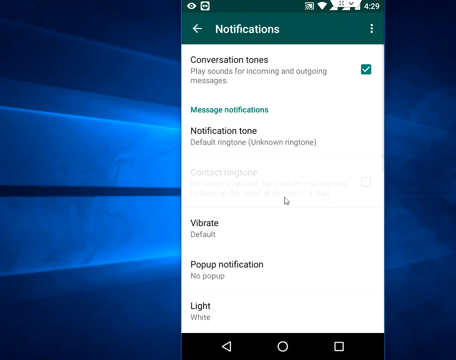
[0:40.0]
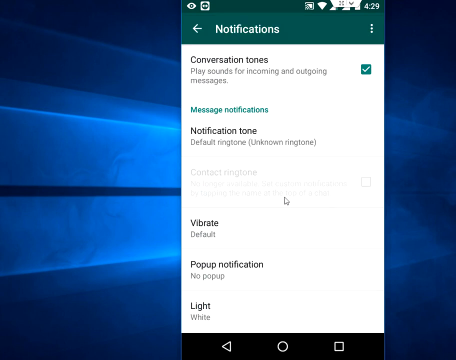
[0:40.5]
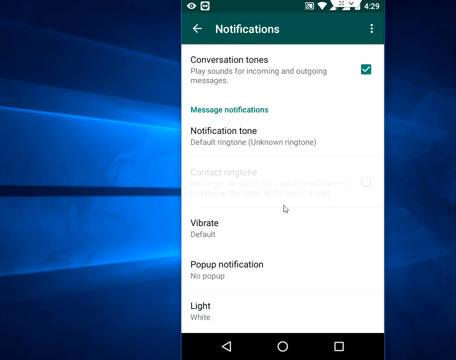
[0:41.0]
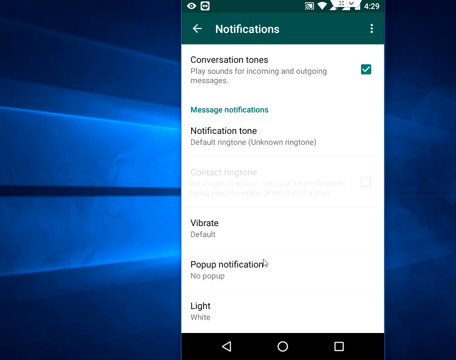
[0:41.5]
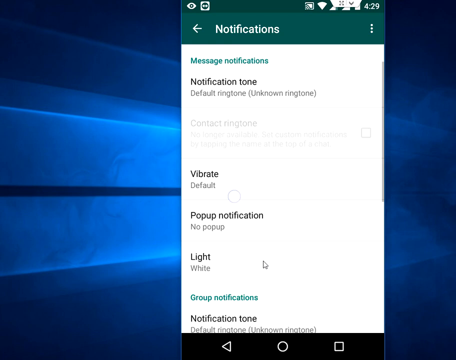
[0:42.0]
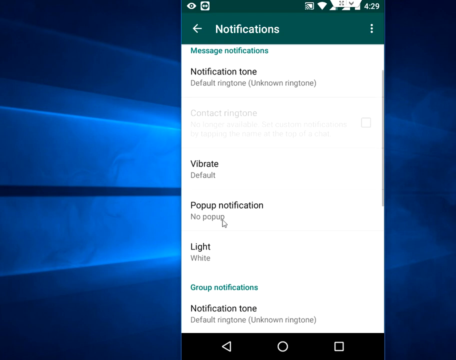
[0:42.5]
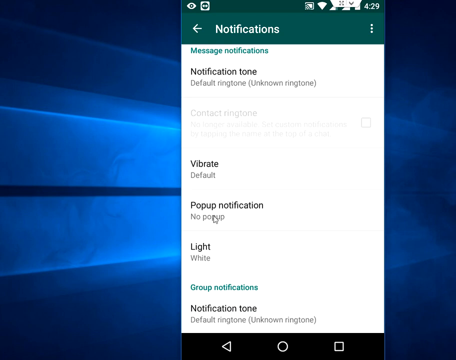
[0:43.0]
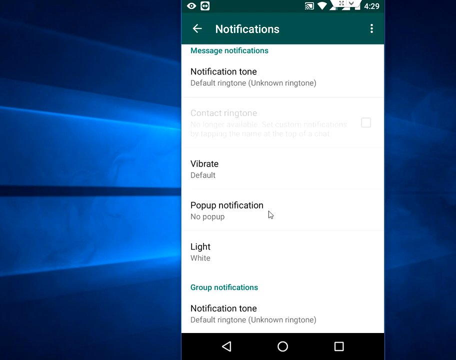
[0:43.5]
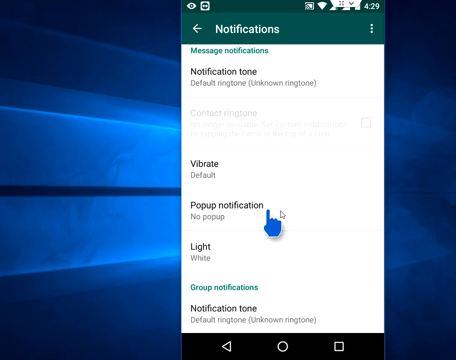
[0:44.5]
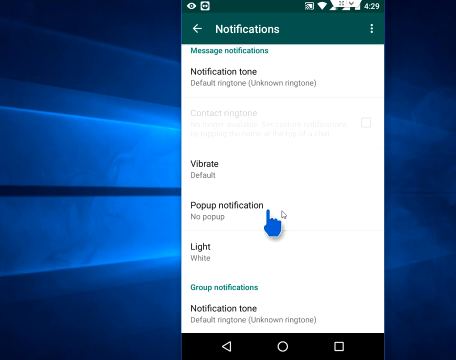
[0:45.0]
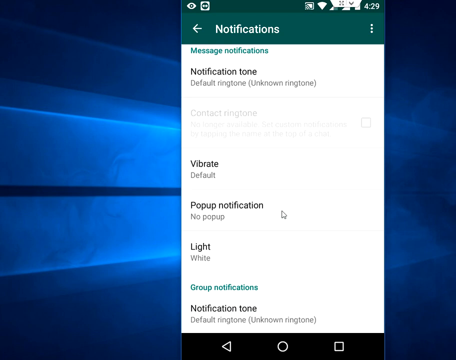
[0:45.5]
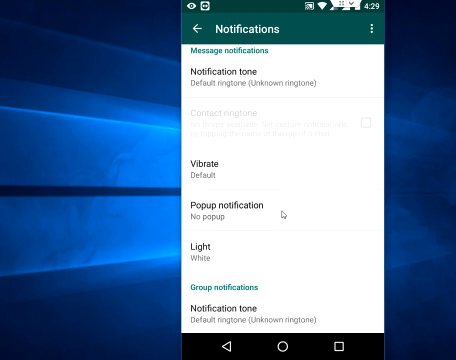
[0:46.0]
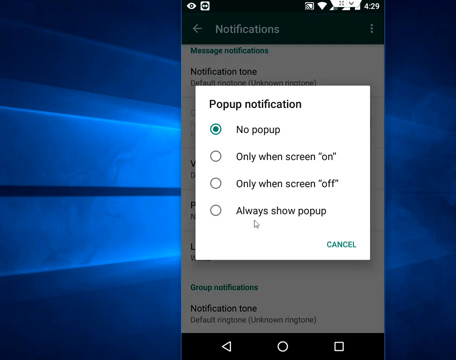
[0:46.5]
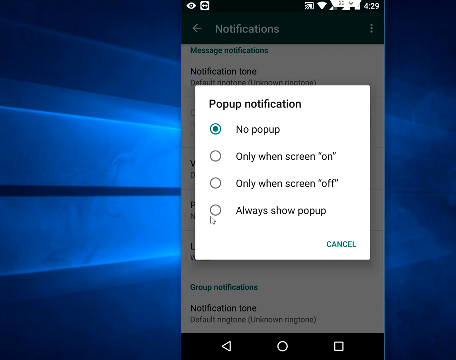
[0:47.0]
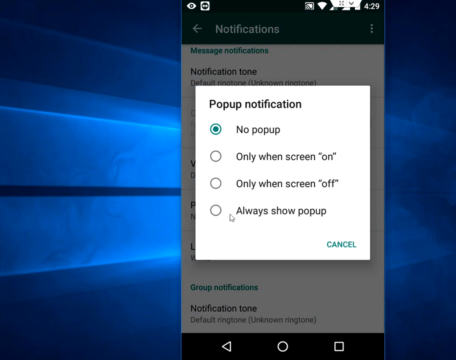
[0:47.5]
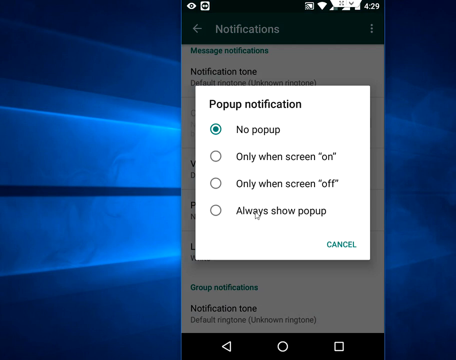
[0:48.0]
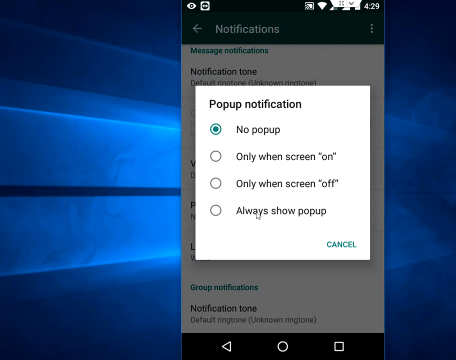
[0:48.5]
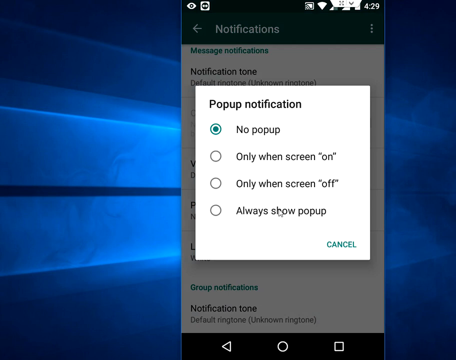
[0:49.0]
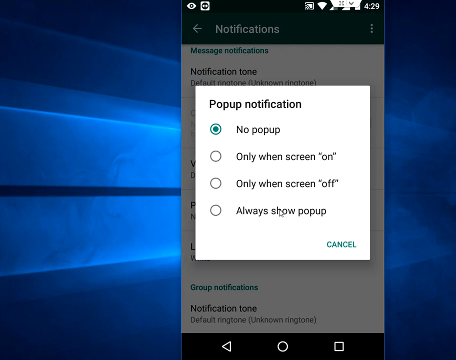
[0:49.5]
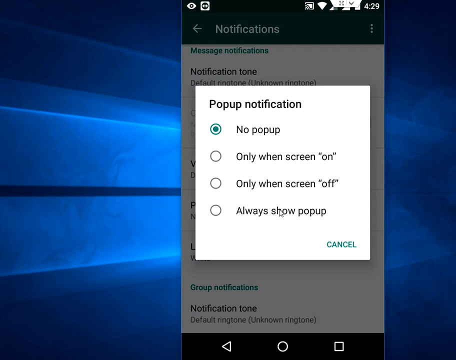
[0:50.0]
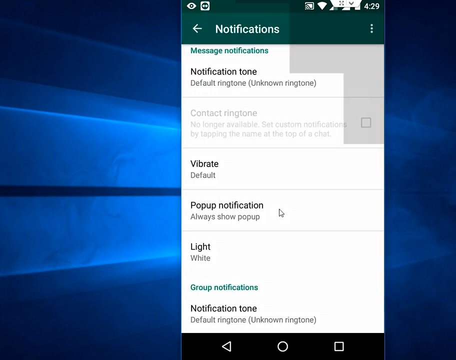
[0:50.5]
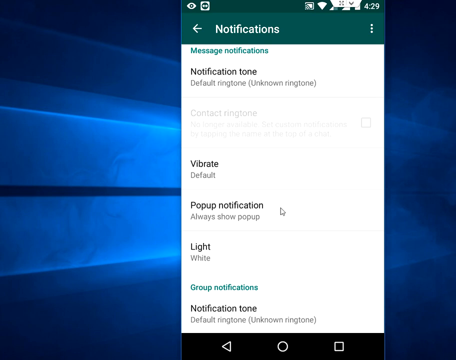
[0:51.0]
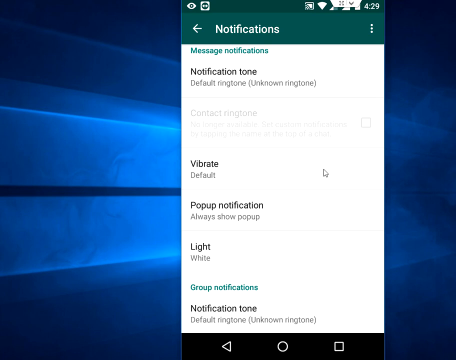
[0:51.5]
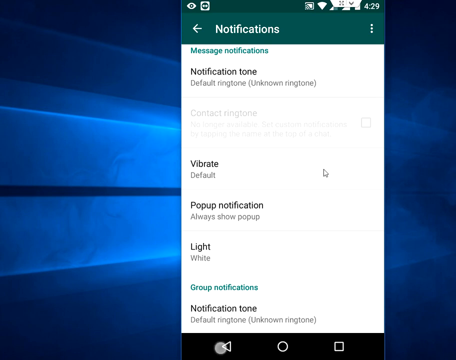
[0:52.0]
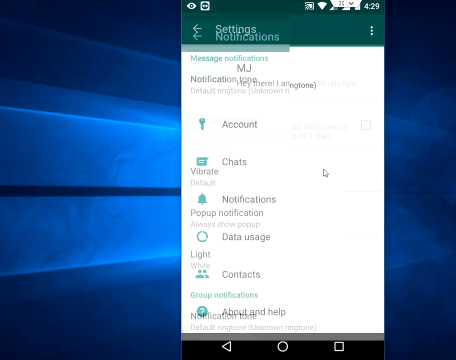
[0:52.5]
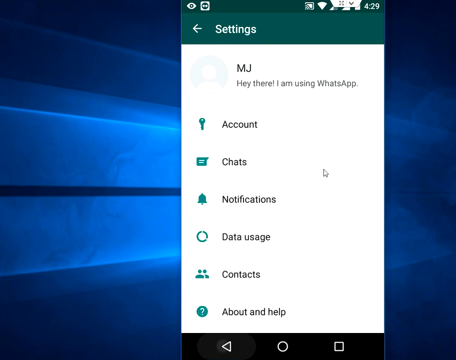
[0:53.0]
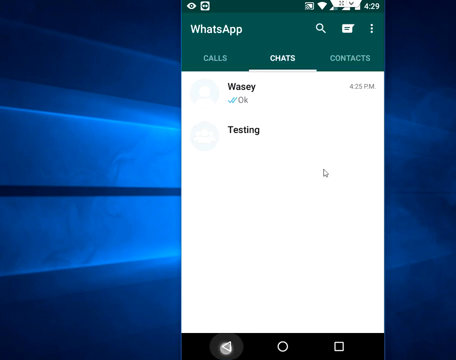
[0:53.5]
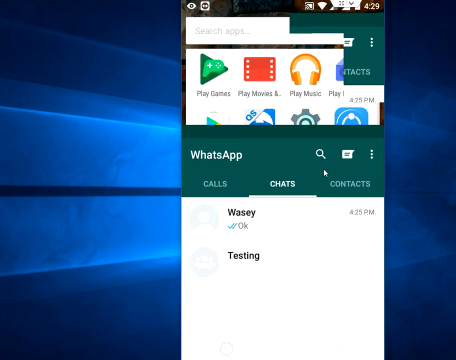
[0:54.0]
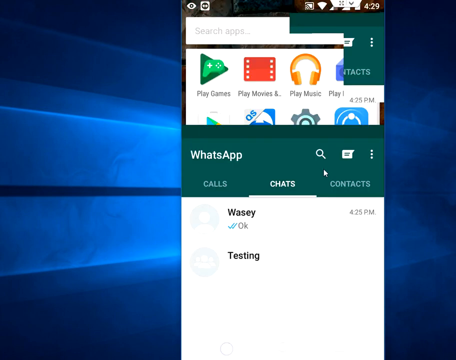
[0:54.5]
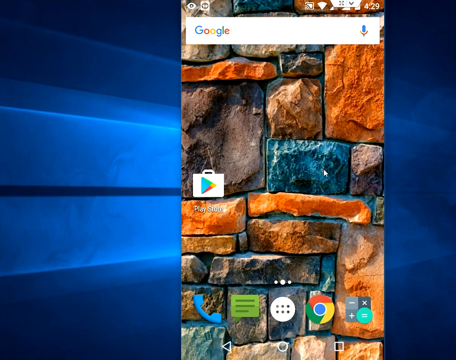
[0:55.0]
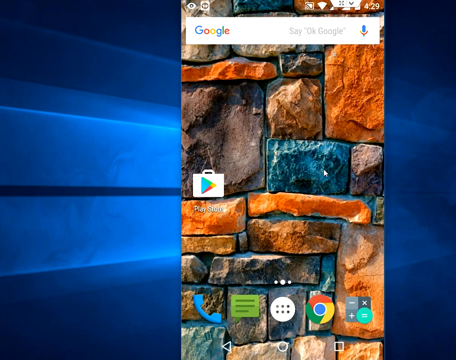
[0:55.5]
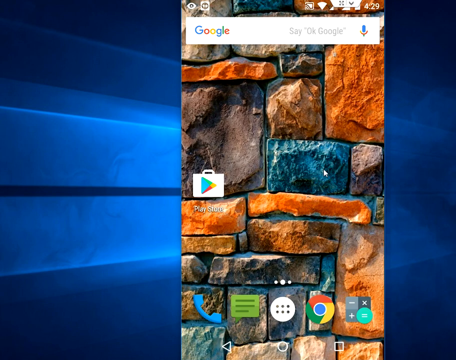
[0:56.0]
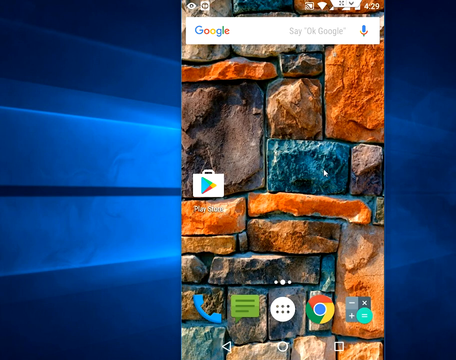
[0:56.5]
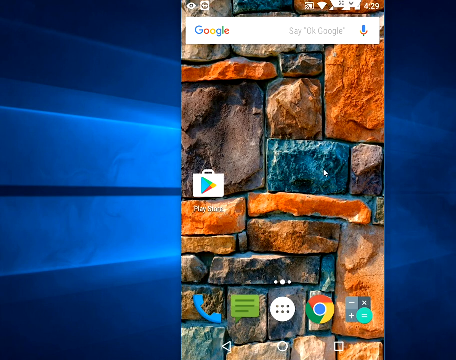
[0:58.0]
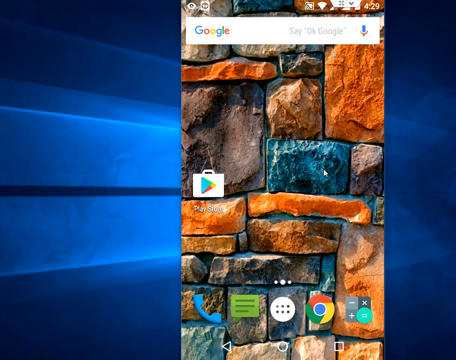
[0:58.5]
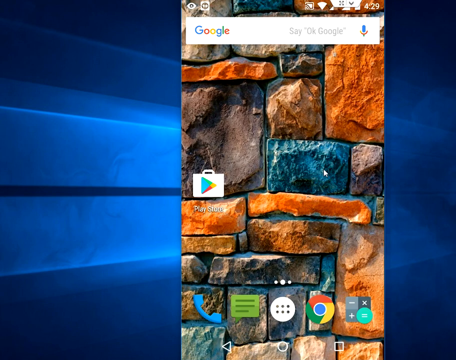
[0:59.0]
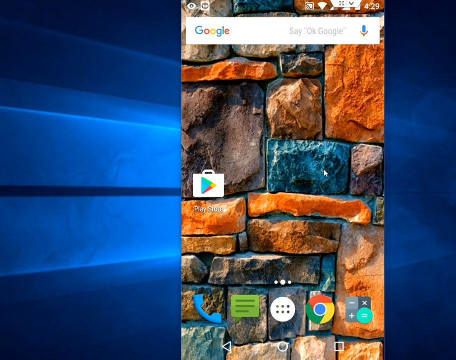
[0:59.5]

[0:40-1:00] A screenshot of somebody's phone is set into what appears to possibly be a PowerPoint presentation with royal blue colors. The phone is opened to a screen with "notifications" at the top, then "conversation tones", which is checked off. Underneath that is "message notifications", then "notification tone" with "default ringtone" under it, "unknown ringtone", and then an empty space. Next come "vibrate default", "pop-up notification" with "no pop-up", and "light white". A mouse cursor seems to point at pop-up notification and apparently chooses it, and a small window opens like an extra panel reading "pop-up notification", with the options "no pop-up", "only when screen on", "only when screen off" and "always show pop-up". There is a "cancel" in the lower right-hand corner, and the options have radio buttons, defaulted to no pop-up. The mouse goes to always show pop-up, then the view quickly changes back to settings, showing that this was in WhatsApp. The app is closed, and the home screen of the cell phone is shown again.